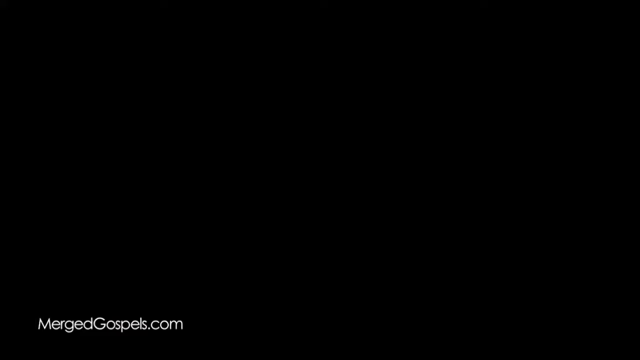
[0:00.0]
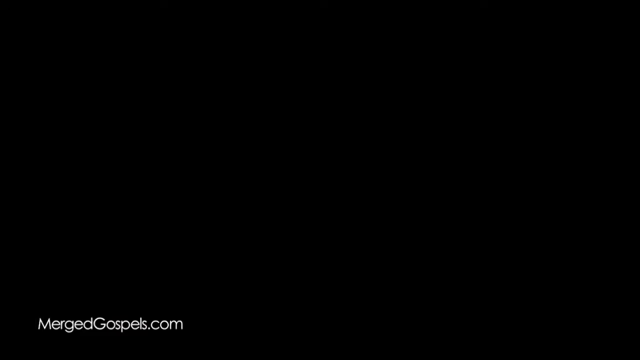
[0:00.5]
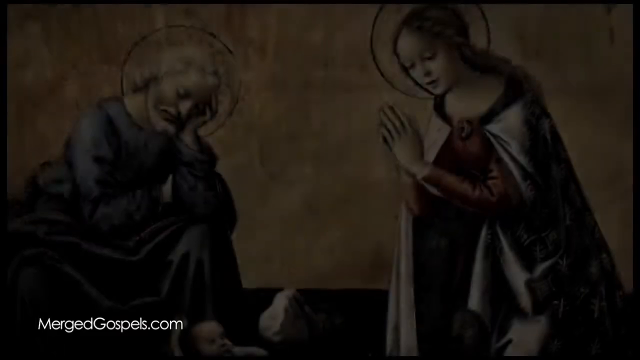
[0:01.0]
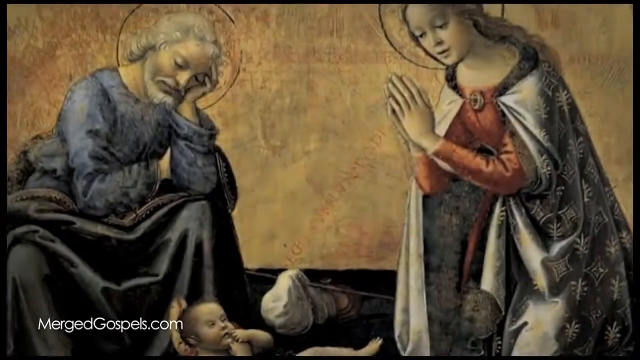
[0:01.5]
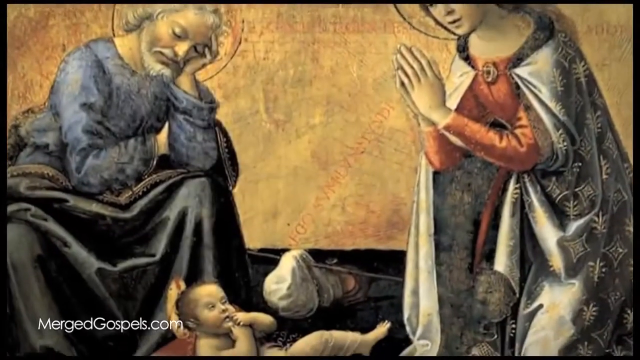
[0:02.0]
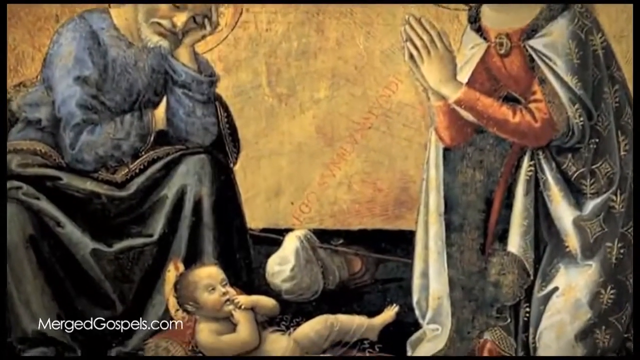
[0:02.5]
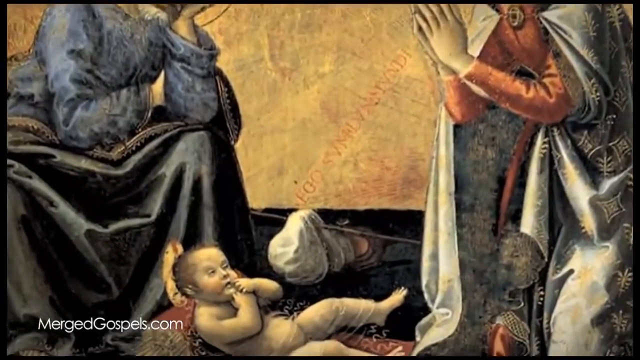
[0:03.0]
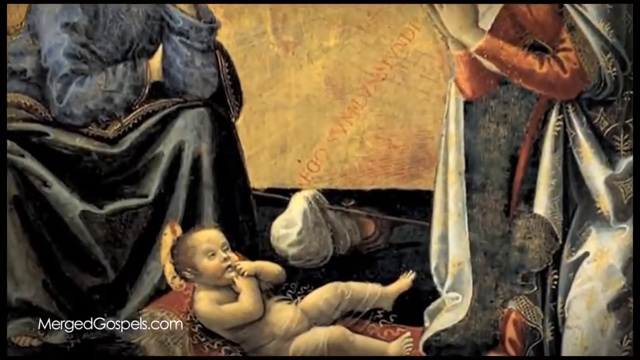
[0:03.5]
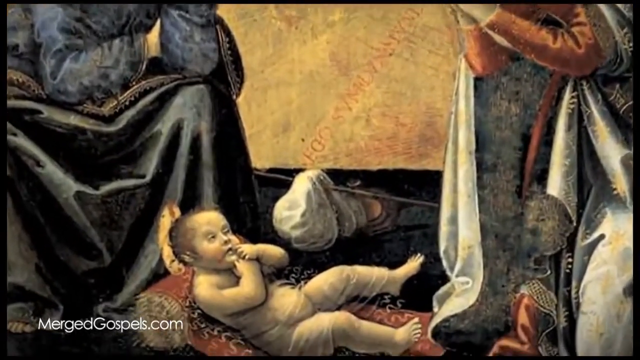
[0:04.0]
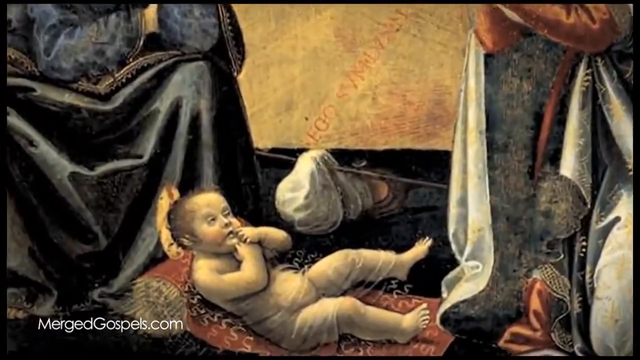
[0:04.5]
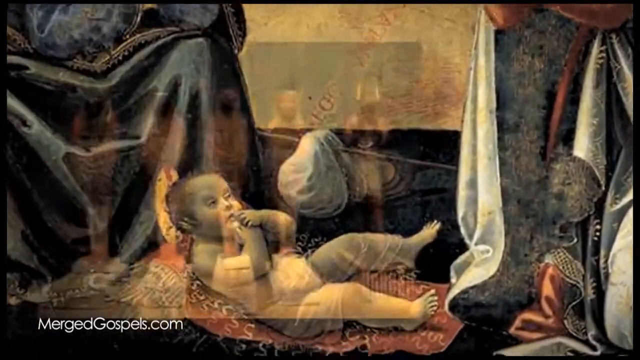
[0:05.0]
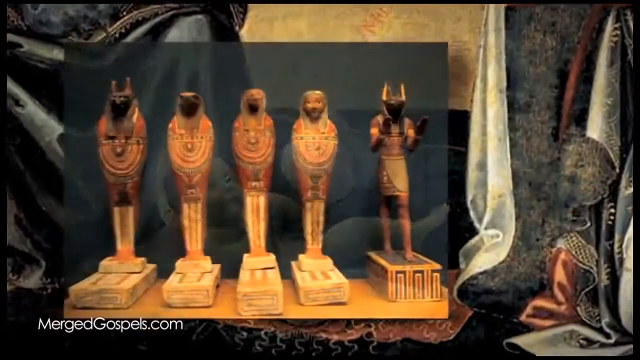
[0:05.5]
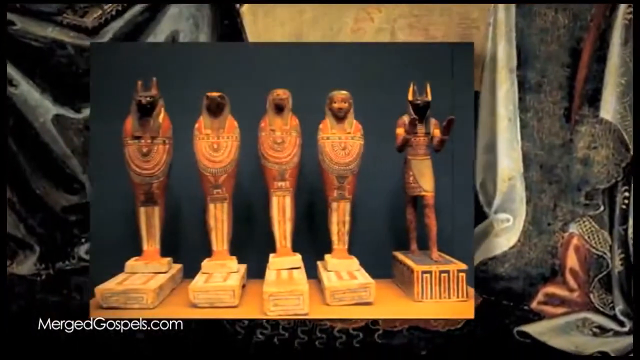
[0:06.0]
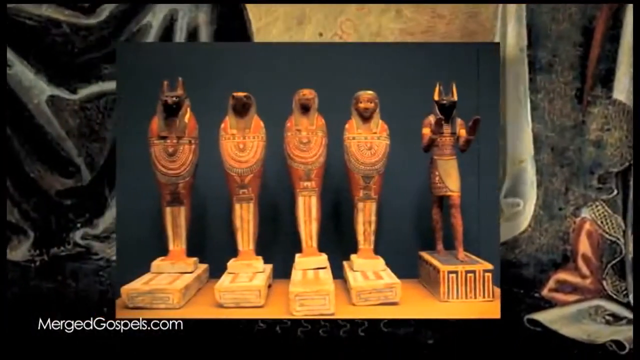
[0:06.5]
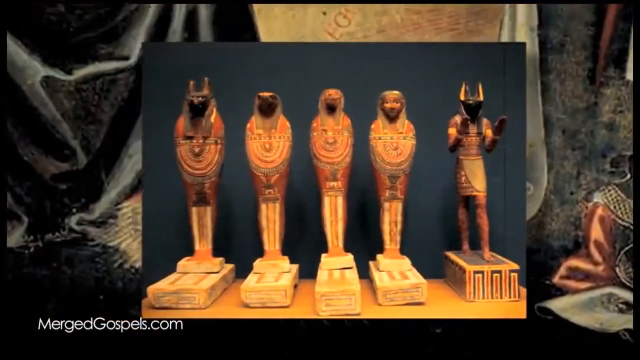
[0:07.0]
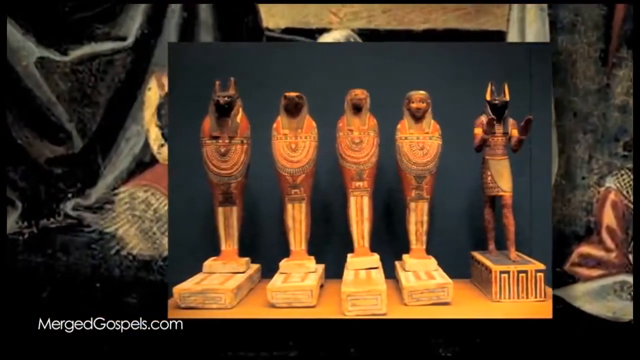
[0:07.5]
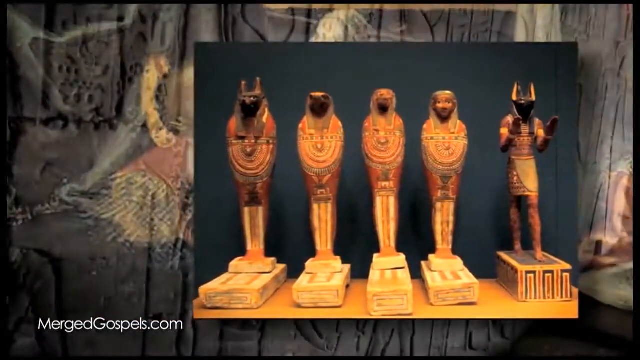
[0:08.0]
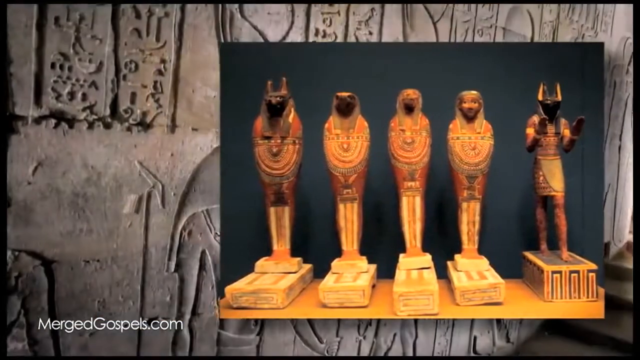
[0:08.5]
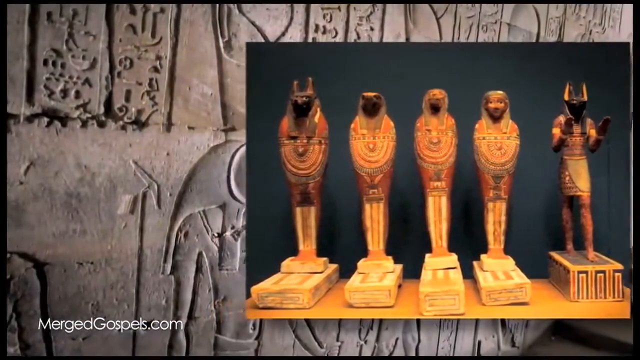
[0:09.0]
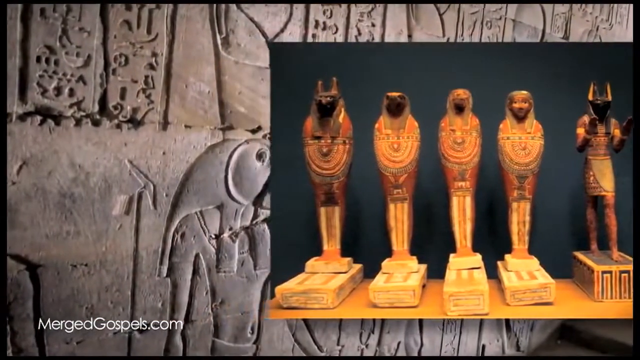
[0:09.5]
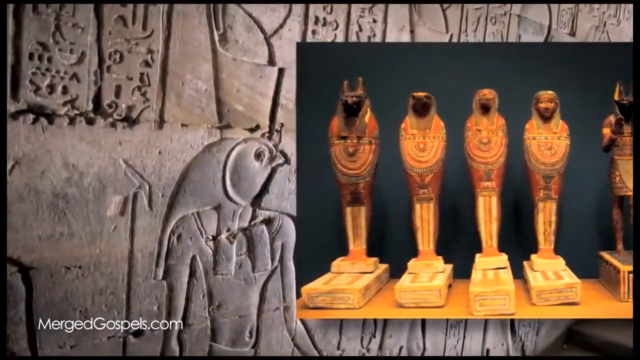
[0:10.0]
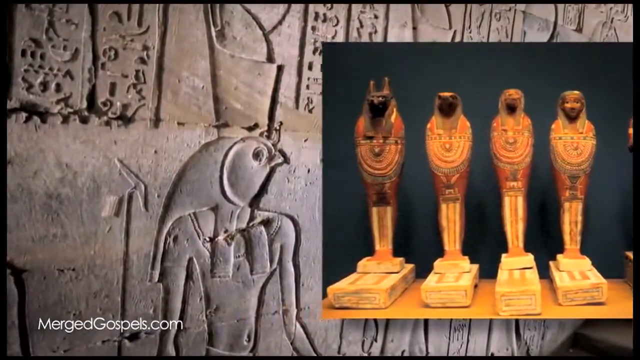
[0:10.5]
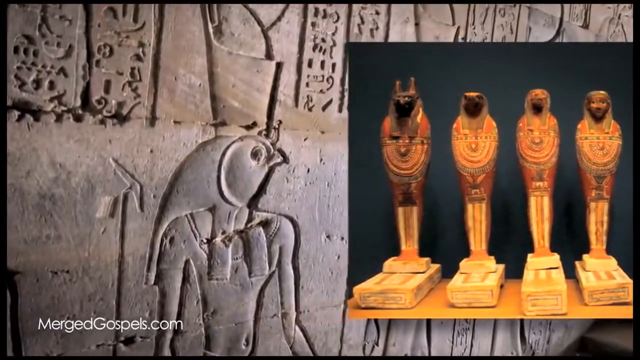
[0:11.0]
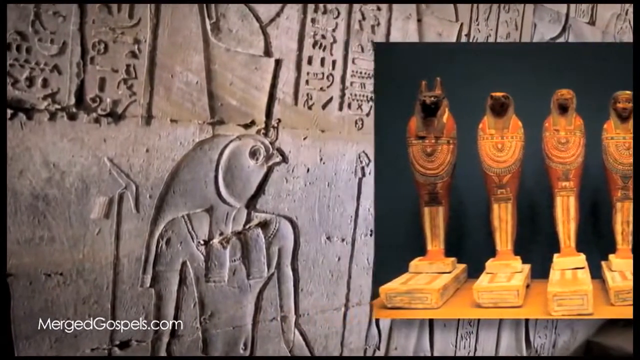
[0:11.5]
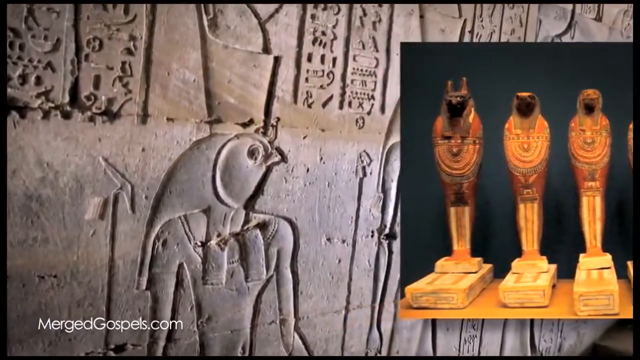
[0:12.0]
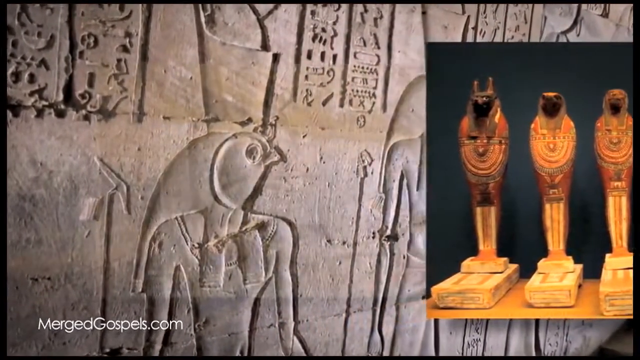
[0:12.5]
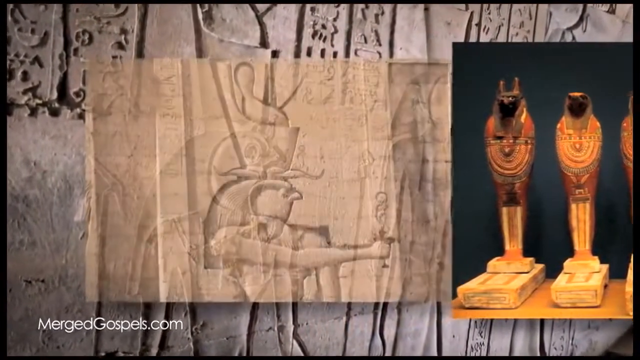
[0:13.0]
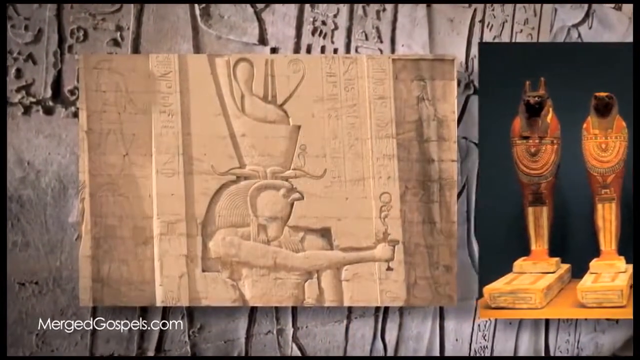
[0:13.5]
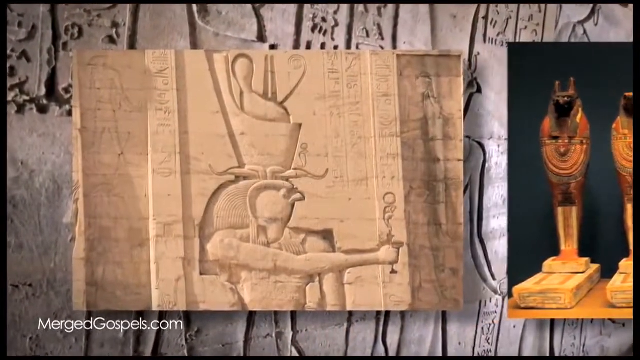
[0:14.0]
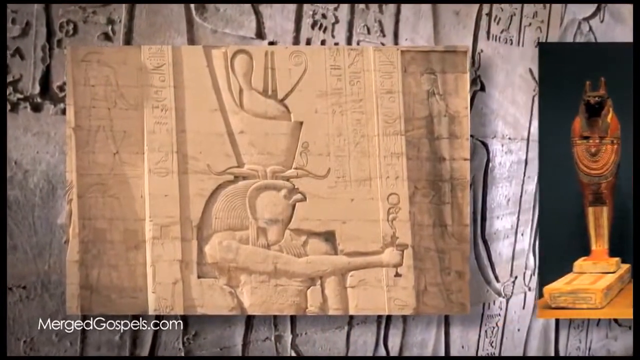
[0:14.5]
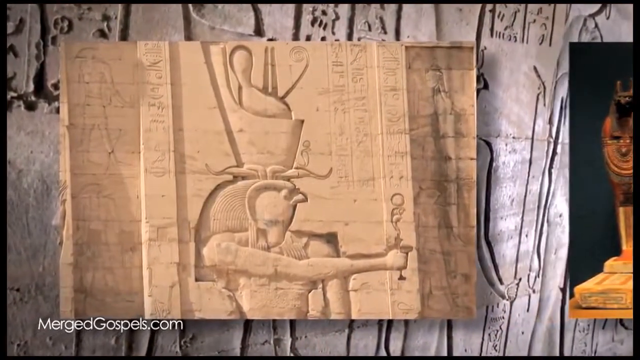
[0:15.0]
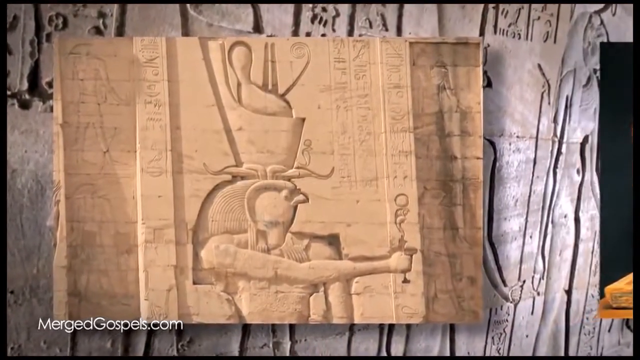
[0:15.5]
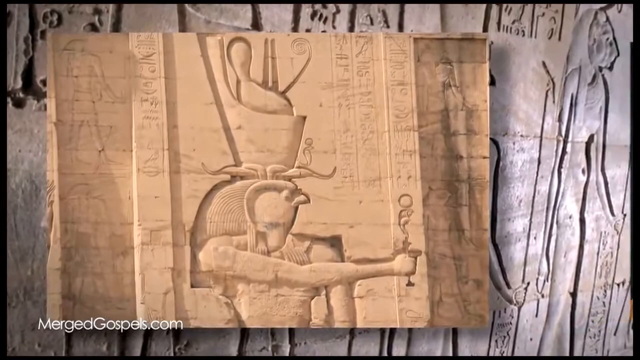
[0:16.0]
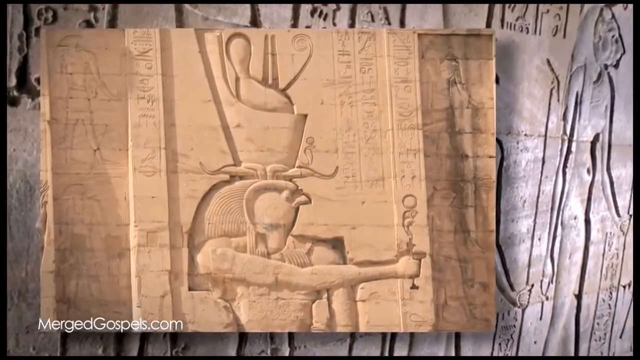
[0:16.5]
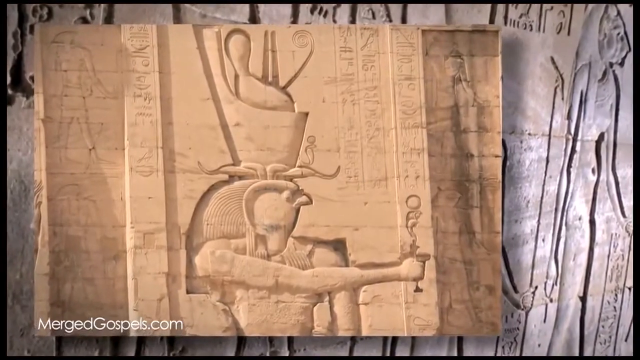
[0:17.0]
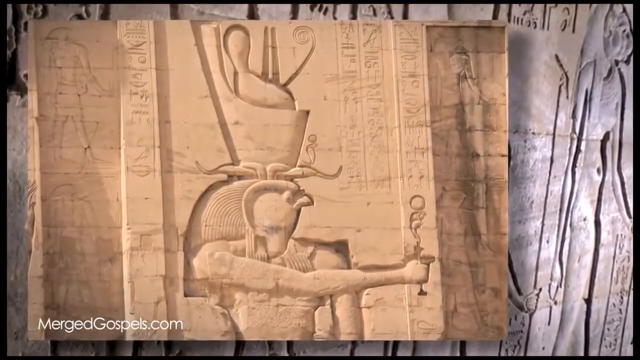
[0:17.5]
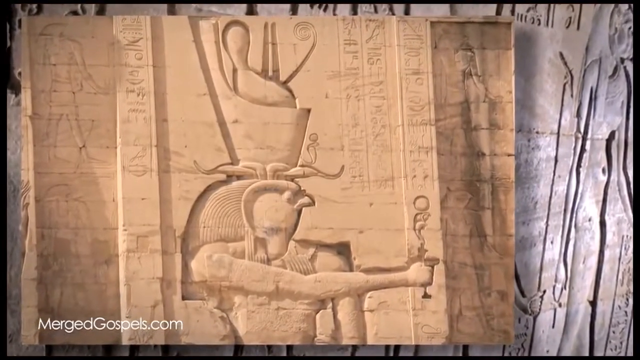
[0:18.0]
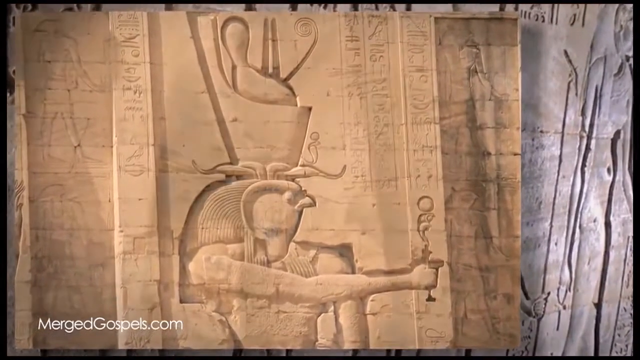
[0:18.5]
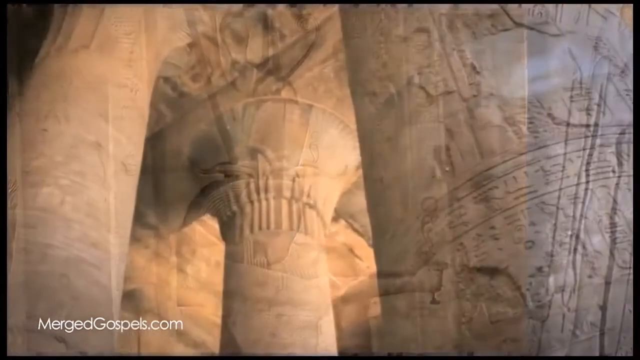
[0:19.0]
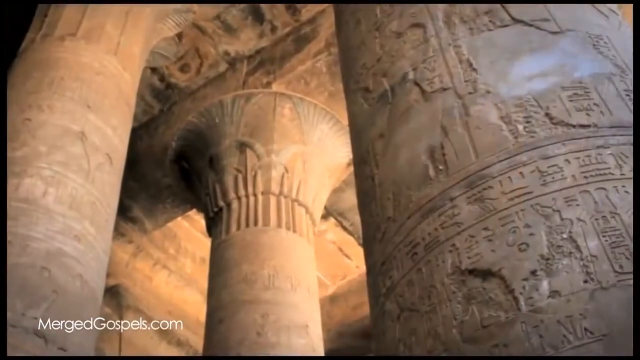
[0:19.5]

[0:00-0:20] The screen begins with a black background, with small grey writing in the bottom left-hand corner that reads "mergedgospels.com". The video then opens onto an old painting with three characters. On the left is a man with a halo painted around him, wearing a blue shirt and a blue cloak, with grey hair, a grey beard and a grey moustache. He is sat, resting his right arm on his knees and his left arm on his face, resting his face with his eyes closed. His face is turned down to the baby lying at the bottom of the image. The baby is not extremely clear, but he is lying in a manger. On the right of the image is a woman praying, sat on her knees and praying towards the infant. She has a halo, long hair, a red-orange t-shirt dress and an intricately decorated silver cloak. The background of the image is orange. The view then focuses in on the baby, and it becomes clear that the baby is Jesus. He has a halo, lies on his back with his face pointed towards the woman, apparently the Virgin Mary, and wears white trousers. Another picture then comes on top: a large rectangular image in the centre, with the original painting still visible in the background. It shows five ornaments from the ancient Egyptian era: on the left one with a black mask and pointed ears, to its right one with an eagle face, to the right of that two figures that look like men, and to the right of this a black-faced dog with pointed ears. These are figurines and sarcophaguses, and it is not clear how big they are. The image in the back is blue; as the figures image moves across the screen from left to right, the image behind is slowly revealed from left to right. It shows carvings seen within the pyramids: a bird god with a human body, holding something, though it is not clear what.